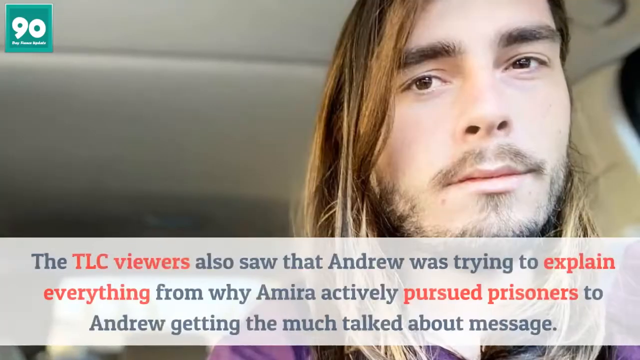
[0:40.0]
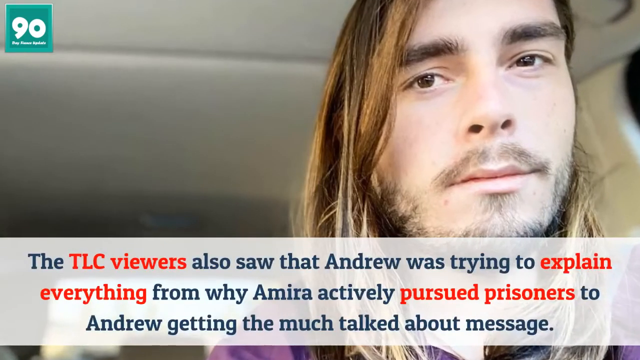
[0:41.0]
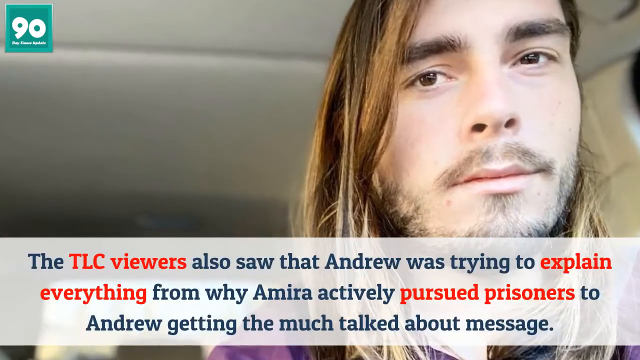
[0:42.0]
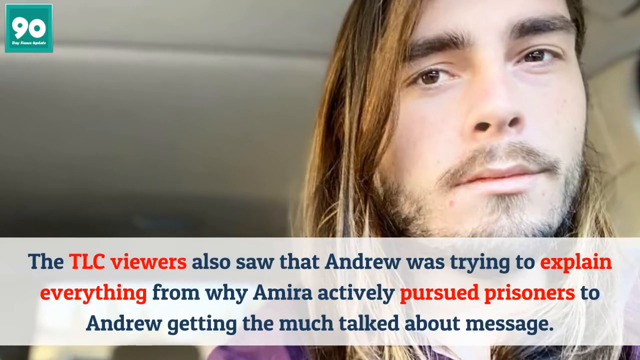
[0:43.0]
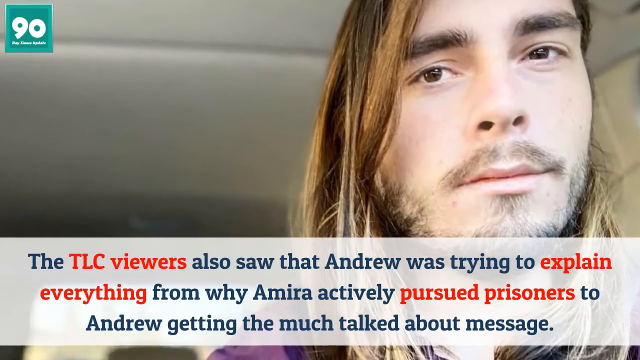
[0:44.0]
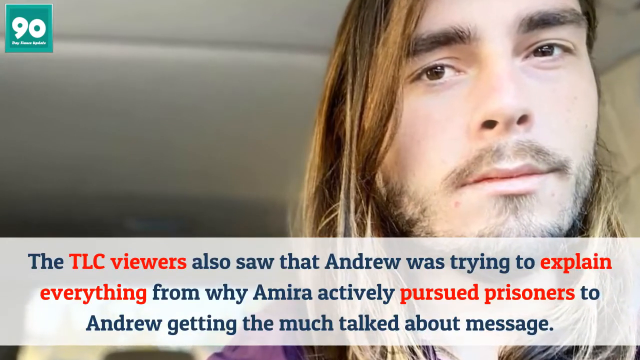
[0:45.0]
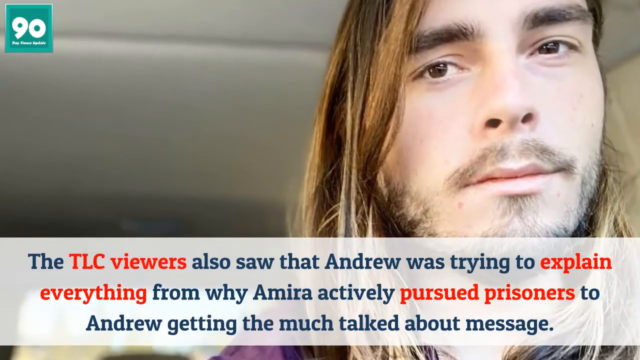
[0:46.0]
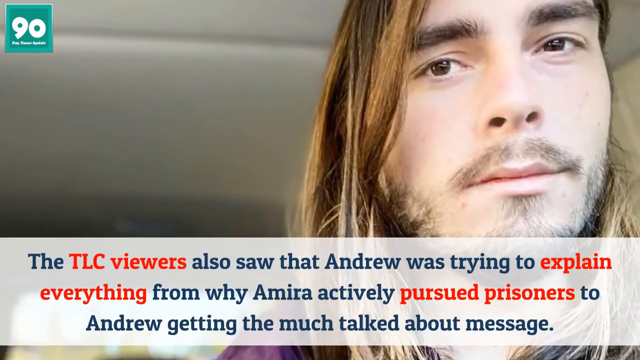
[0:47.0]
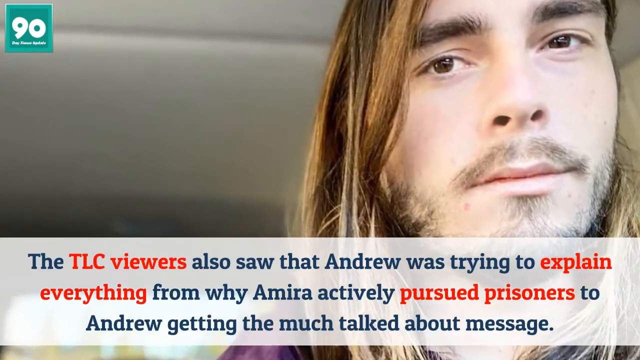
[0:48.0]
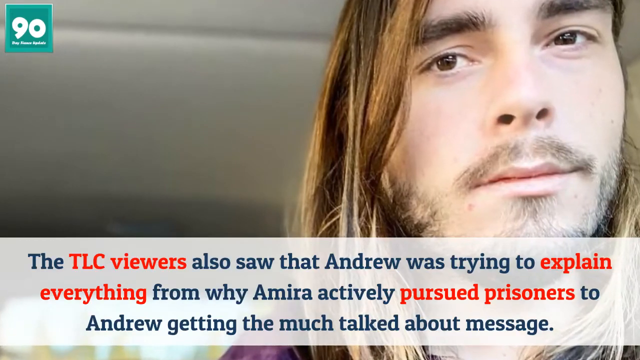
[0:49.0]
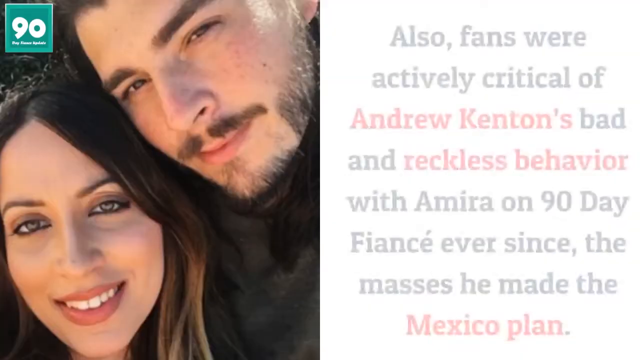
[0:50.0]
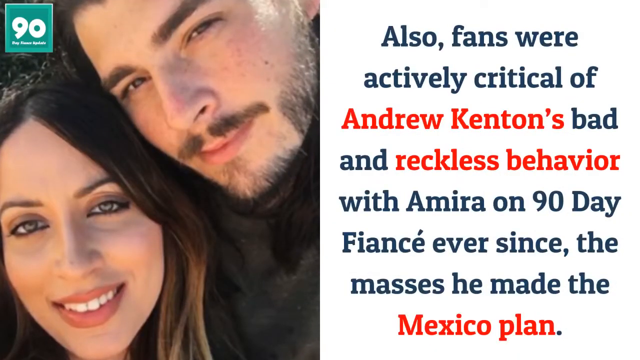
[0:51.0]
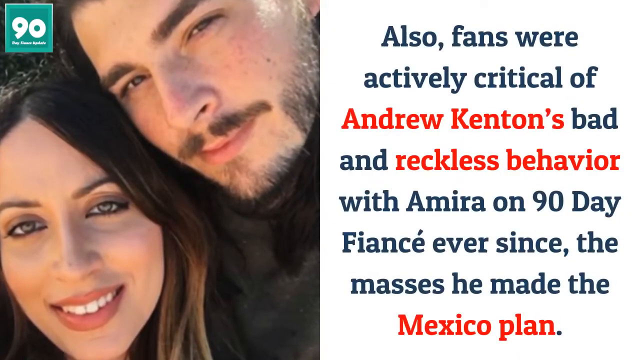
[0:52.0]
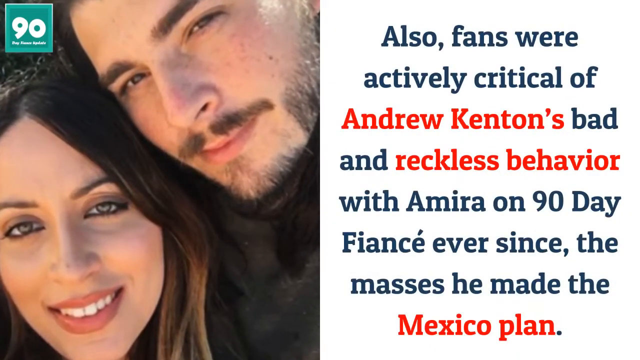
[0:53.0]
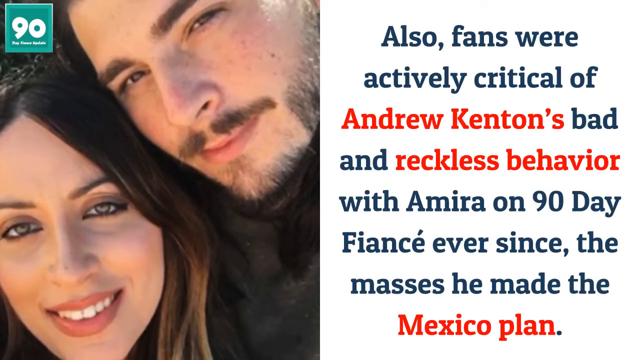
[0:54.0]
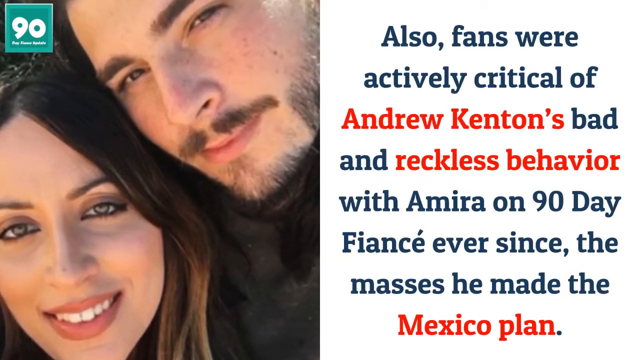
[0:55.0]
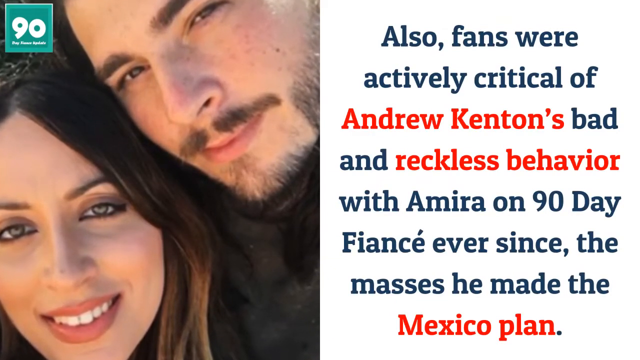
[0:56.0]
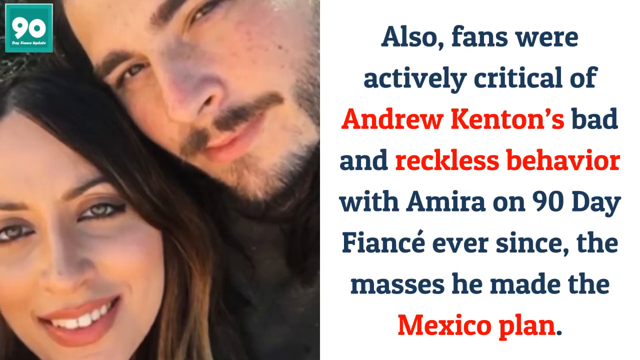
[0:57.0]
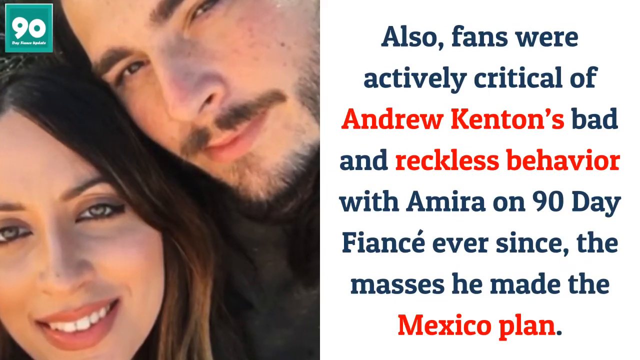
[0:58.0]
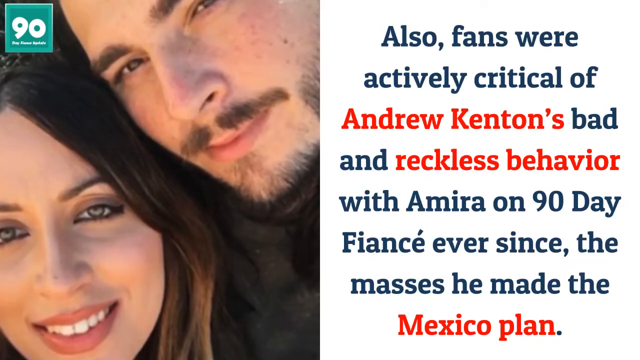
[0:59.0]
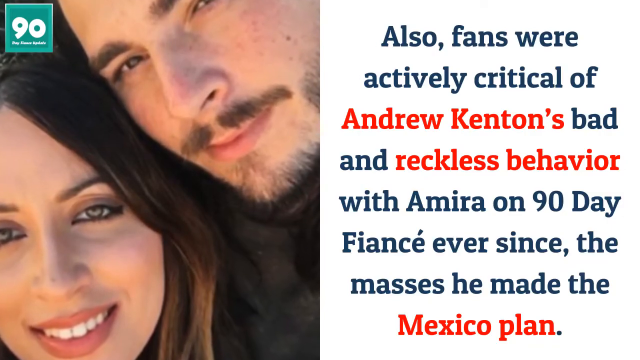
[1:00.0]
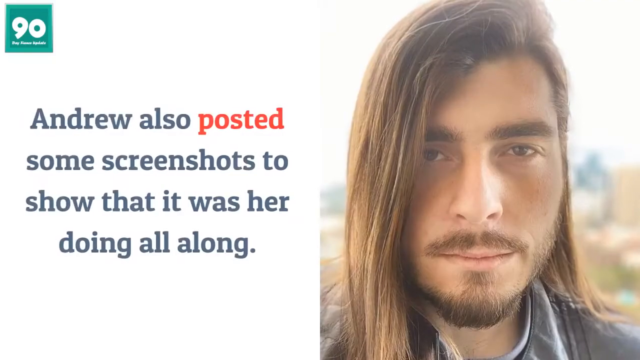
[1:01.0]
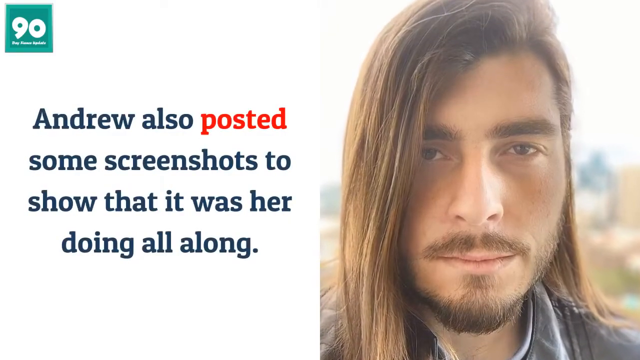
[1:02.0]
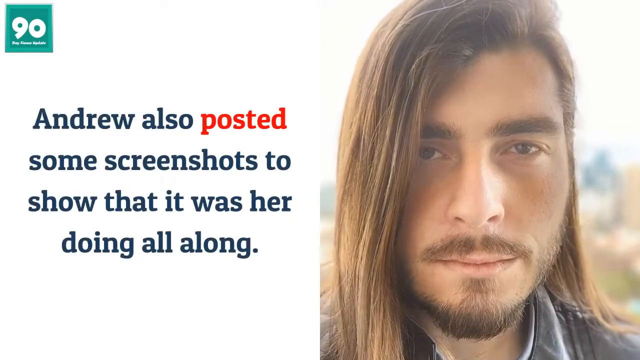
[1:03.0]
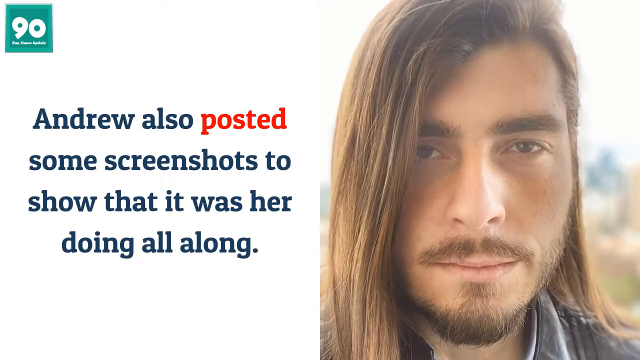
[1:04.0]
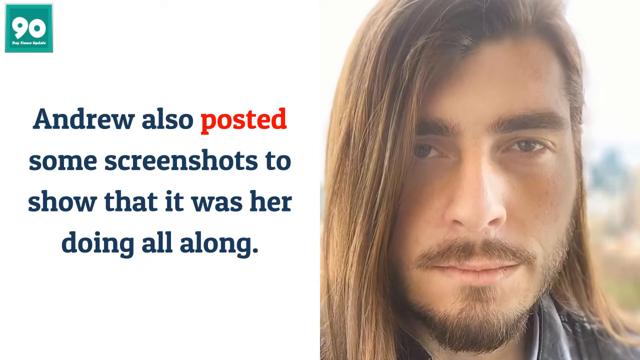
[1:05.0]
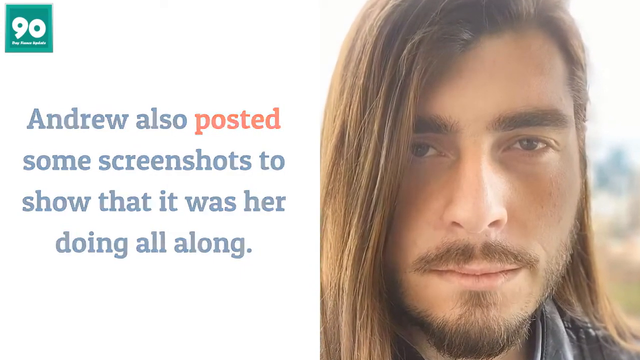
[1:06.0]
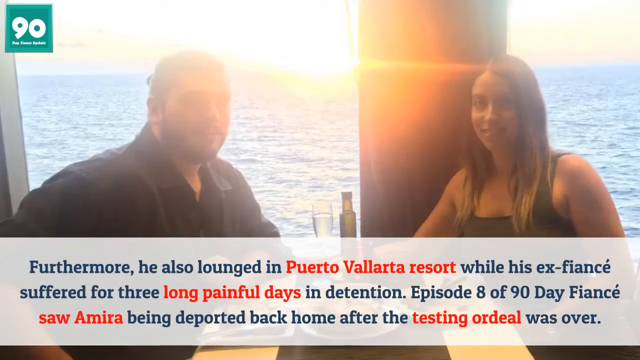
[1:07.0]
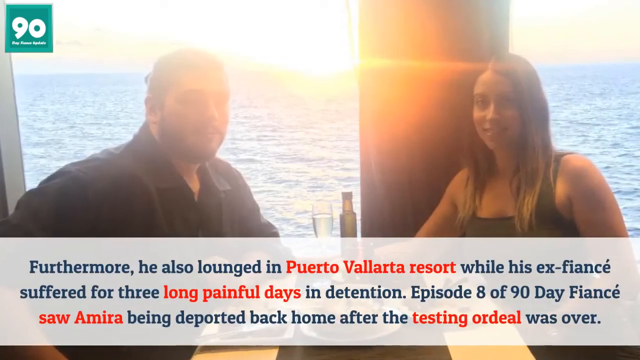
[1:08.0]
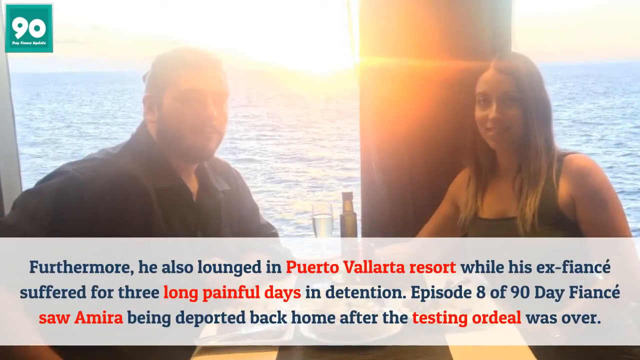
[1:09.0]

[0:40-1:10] An image shows Andrew sitting in a car, with a caption in black and red text overlaid: "the TLC viewers also saw that Andrew was trying to explain everything from why Amira actively pursued prisoners to Andrew getting the much talked about massage." The video cuts to a picture of Andrew and Amira shown earlier, with a caption beside it beginning "Also, fans were actively critical of Andrew Kenton's bad and reckless behavior with Amira on 90 Day Fiance." Another image of Andrew by himself follows, with the caption "Andrew also posted some screenshots to show that was her doing all along." Next is an image of Andrew and Amira on what looks like a romantic date, with the ocean in the background; they are sitting around a table with wine glasses. The overlaid caption says "furthermore, he also lounged in Puerto Vallarta Resort while his ex-fiance suffered for three long, painful days in detention. Episode 8 of 90 Day Fiance saw Amira being deported back home."